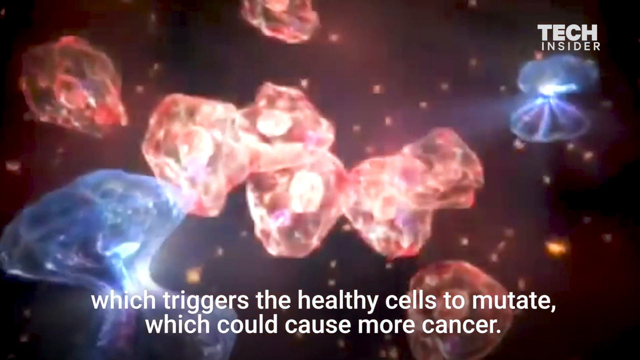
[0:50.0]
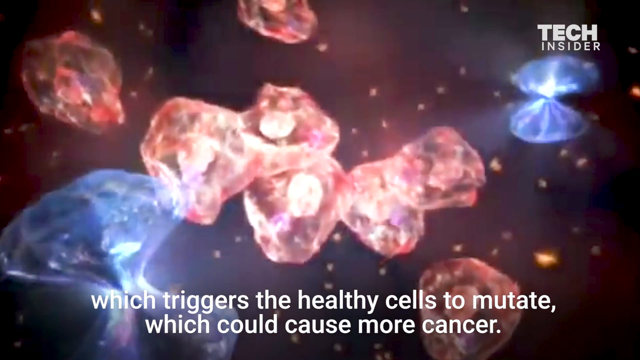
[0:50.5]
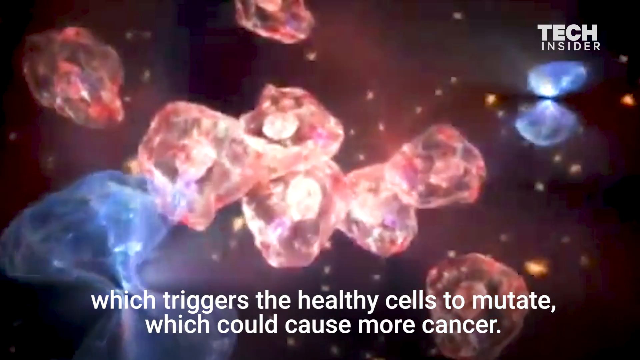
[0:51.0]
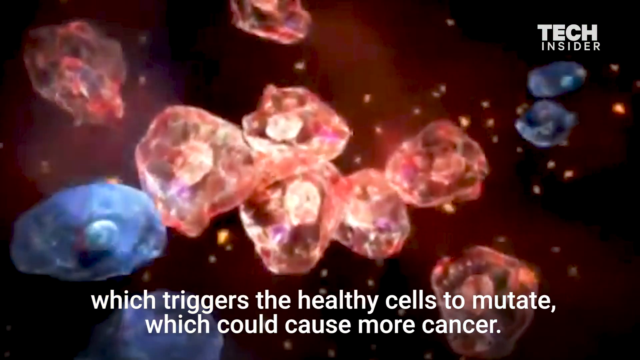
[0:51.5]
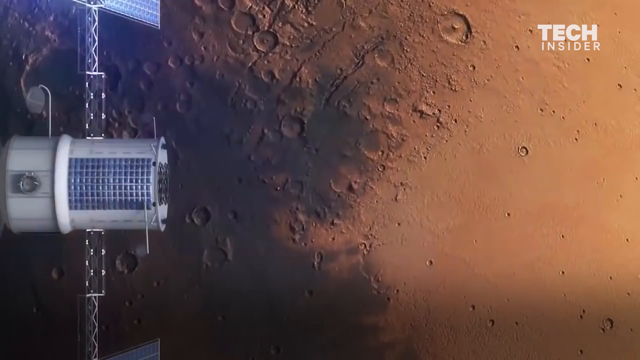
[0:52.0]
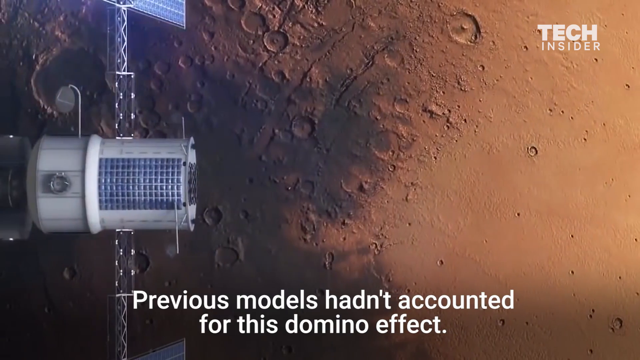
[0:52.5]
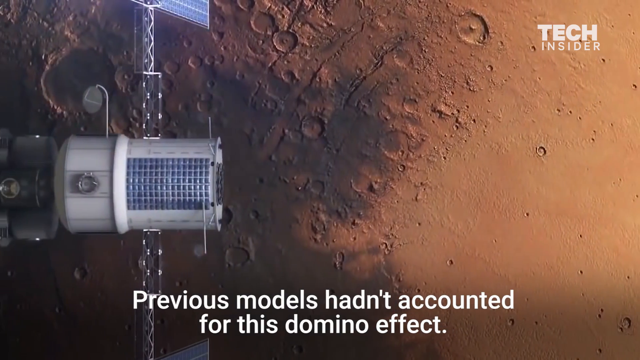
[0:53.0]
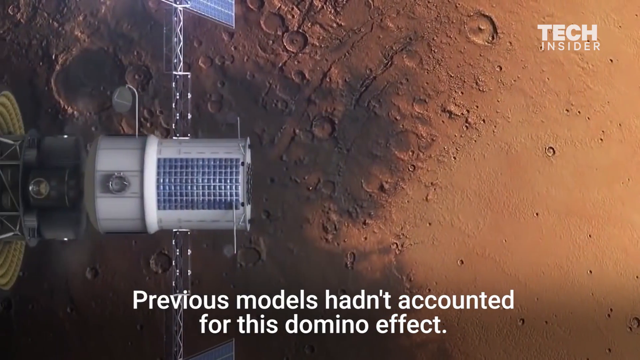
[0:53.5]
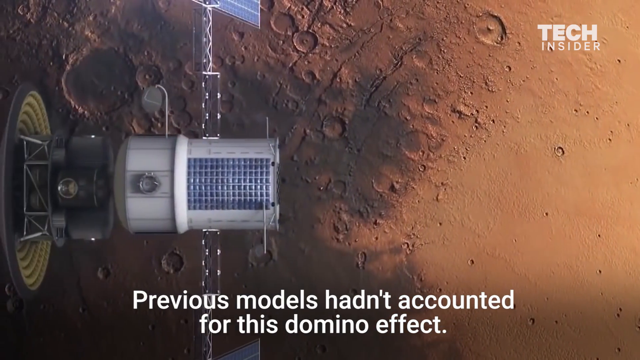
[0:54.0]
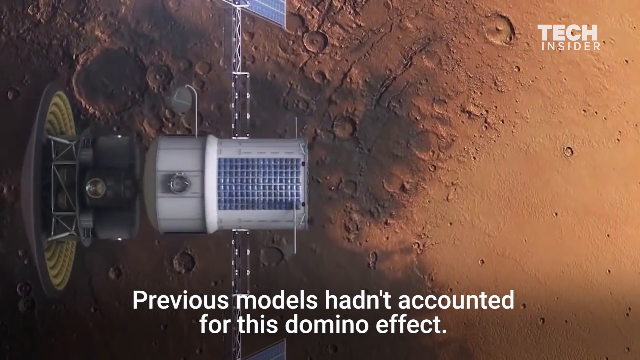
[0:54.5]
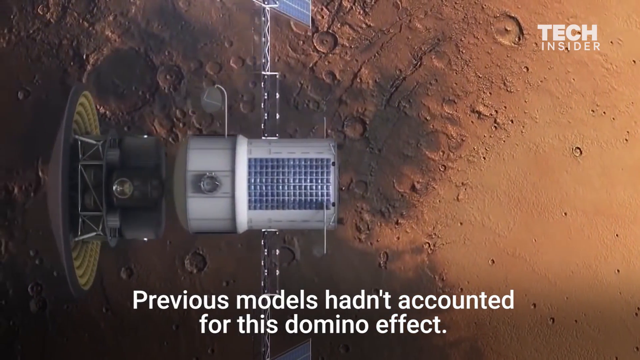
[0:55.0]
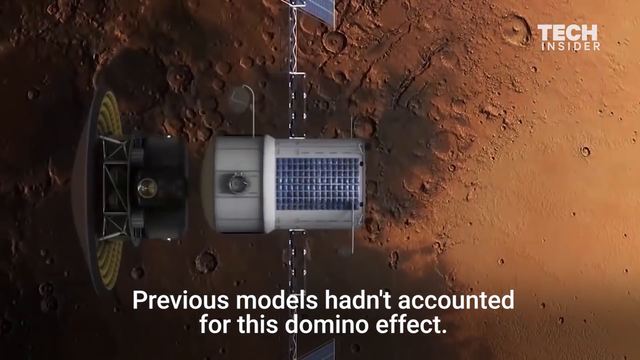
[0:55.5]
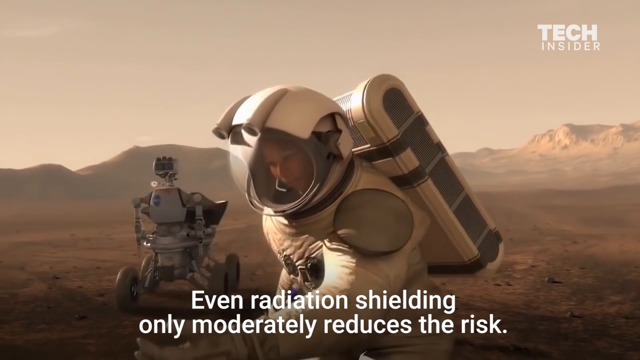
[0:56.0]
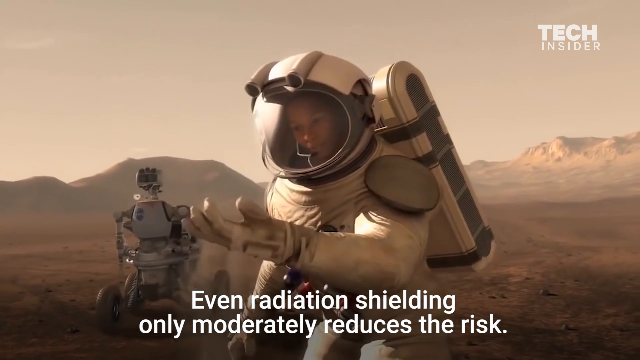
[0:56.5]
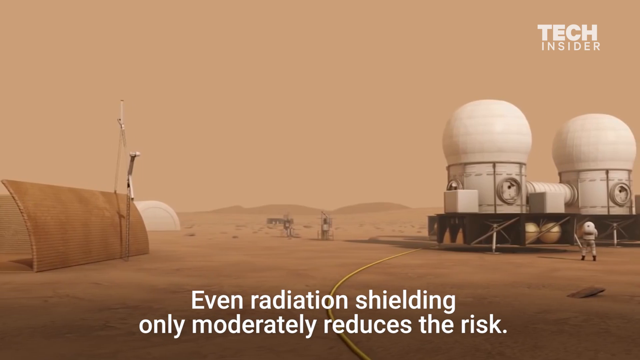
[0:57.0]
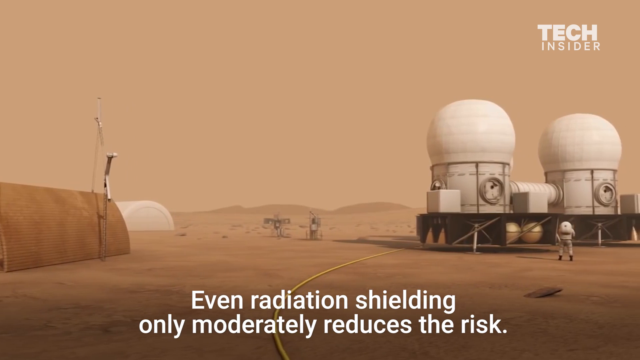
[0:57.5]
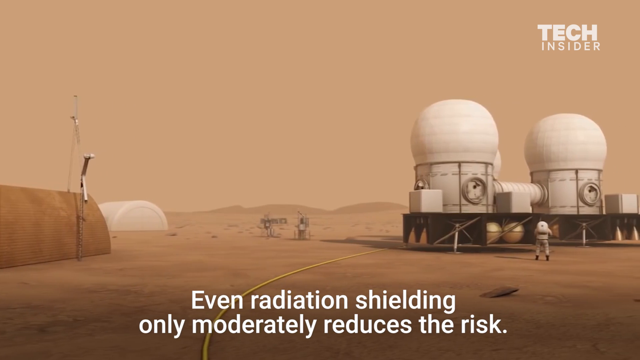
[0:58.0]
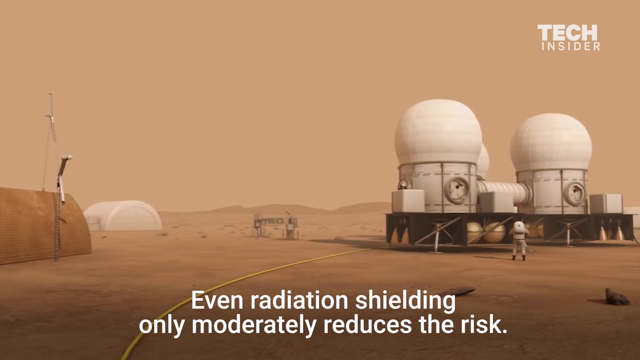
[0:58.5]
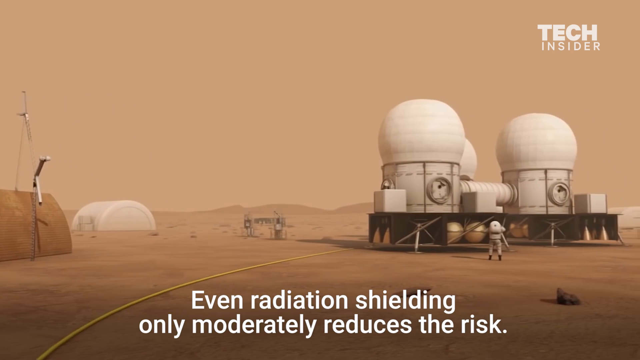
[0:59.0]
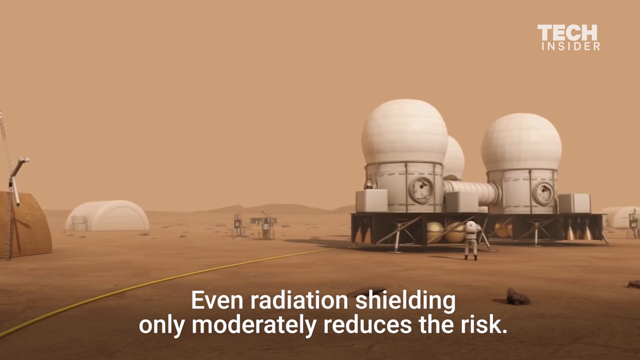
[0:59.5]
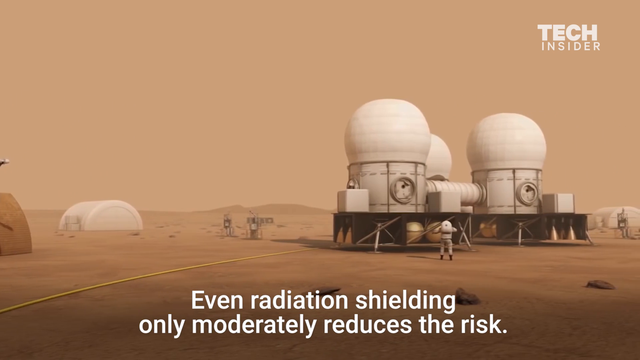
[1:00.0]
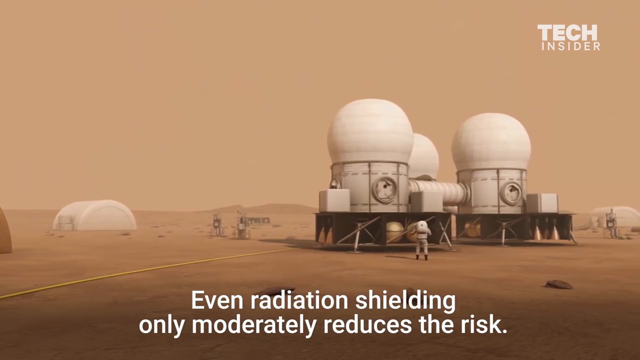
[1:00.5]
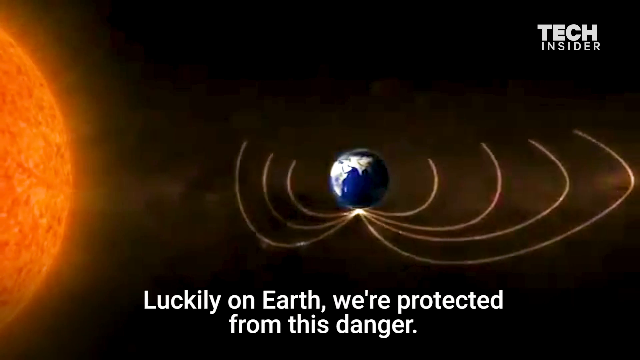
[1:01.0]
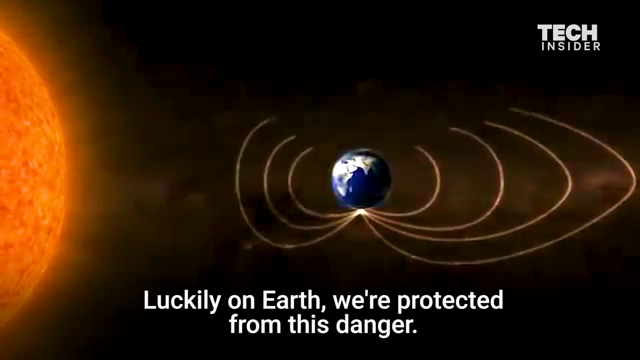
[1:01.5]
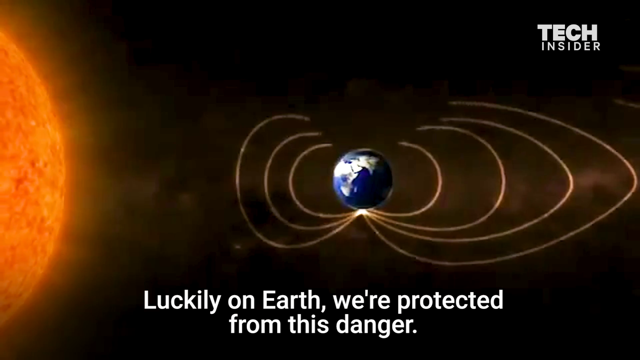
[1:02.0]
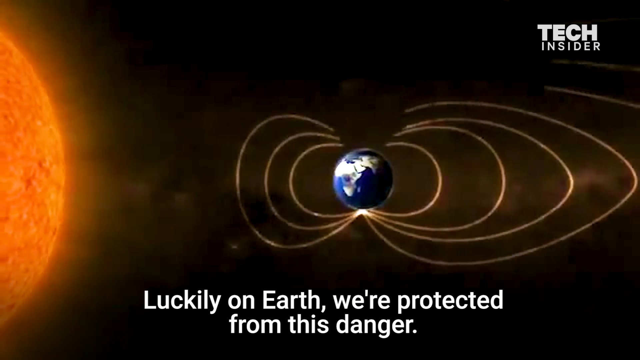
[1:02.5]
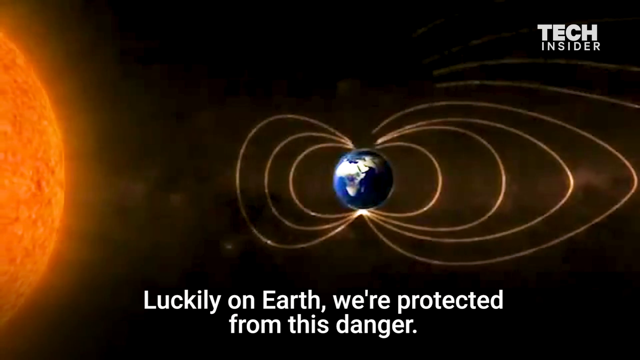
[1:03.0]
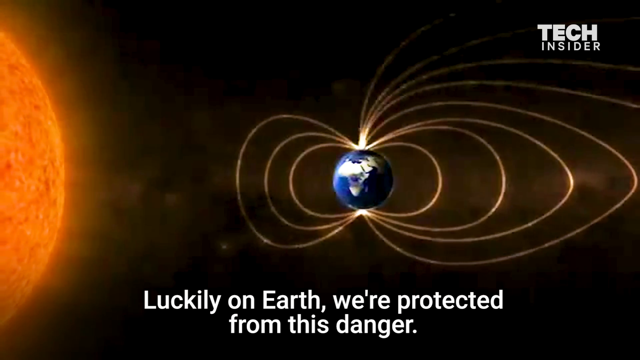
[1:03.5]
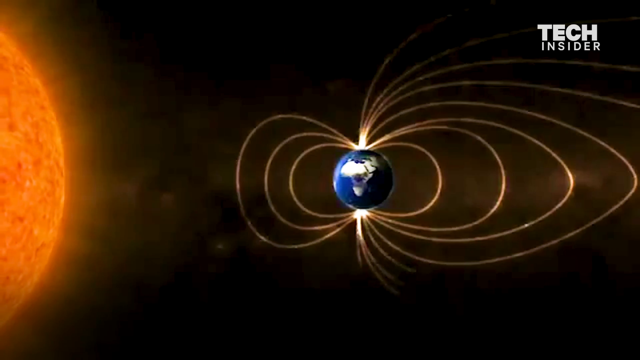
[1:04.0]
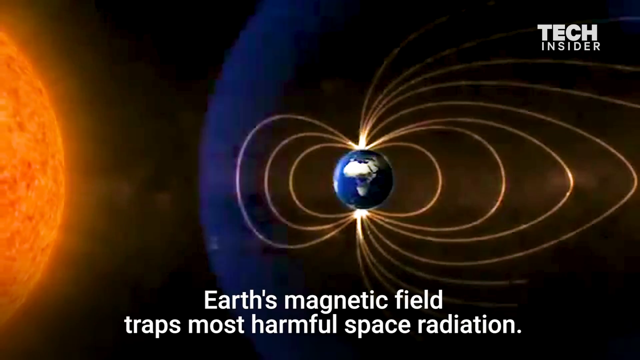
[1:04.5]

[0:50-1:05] A series of images appears: a satellite or spaceship that looks almost like a space station floating above the planet, then some large structures on the ground, presumably habitats for humans, and then more intercellular-style shots.